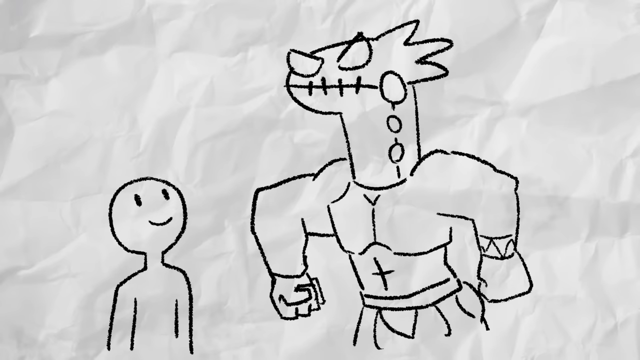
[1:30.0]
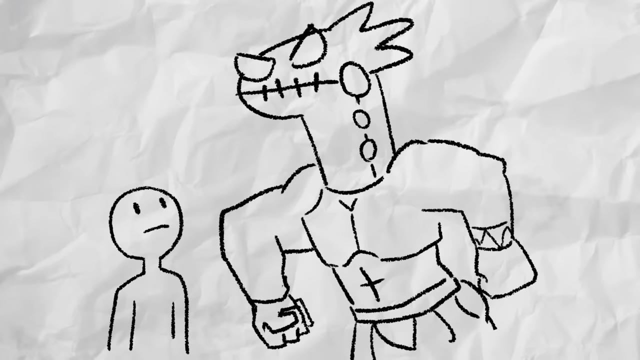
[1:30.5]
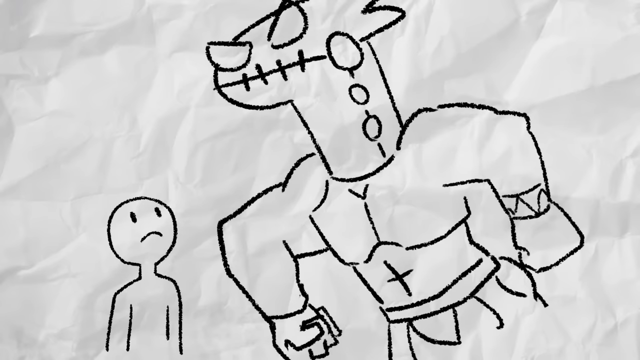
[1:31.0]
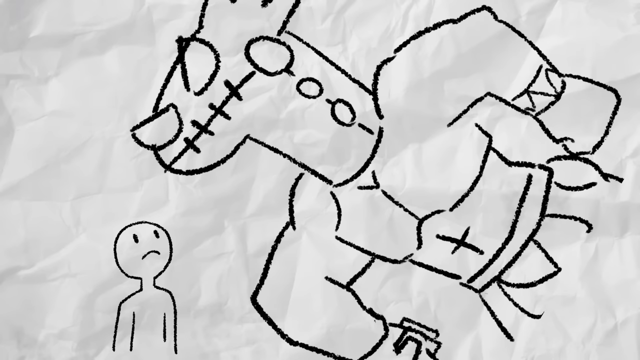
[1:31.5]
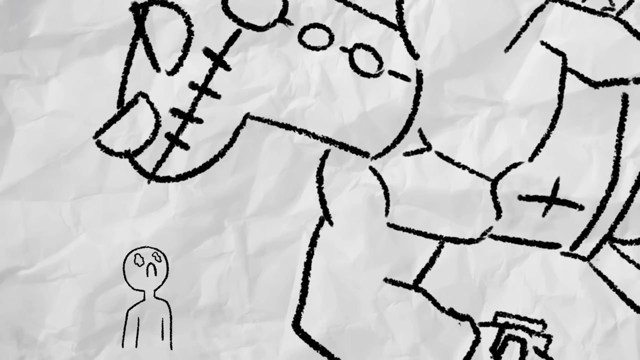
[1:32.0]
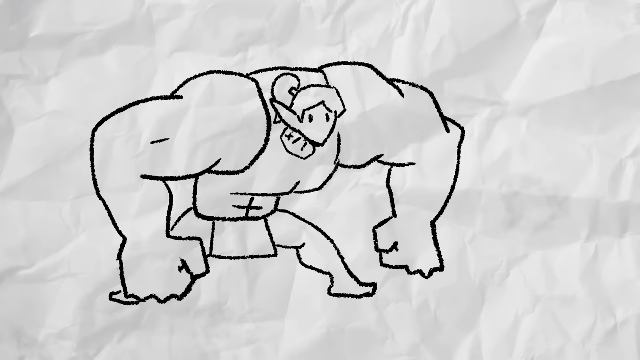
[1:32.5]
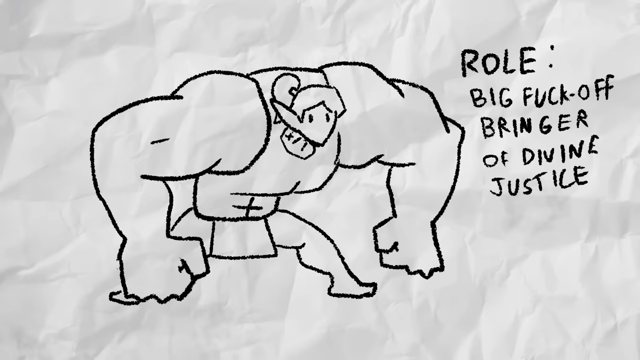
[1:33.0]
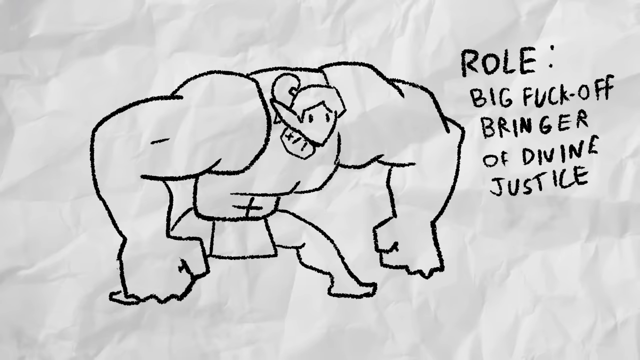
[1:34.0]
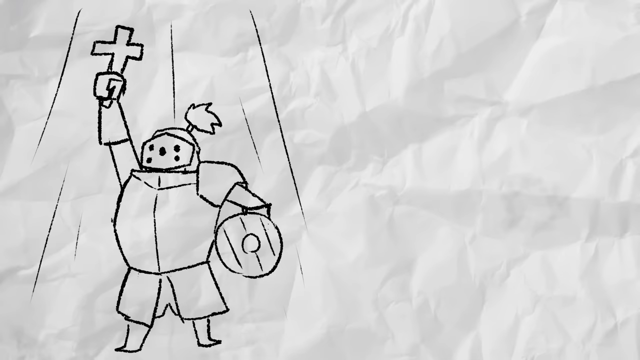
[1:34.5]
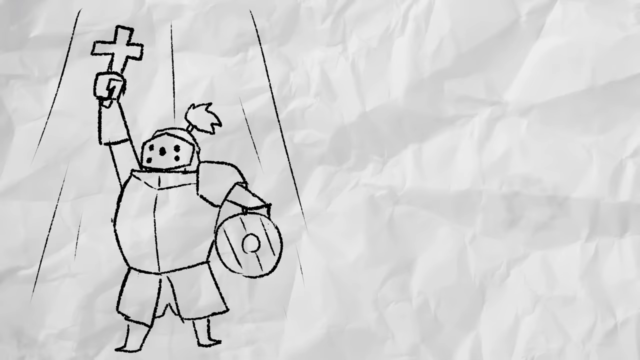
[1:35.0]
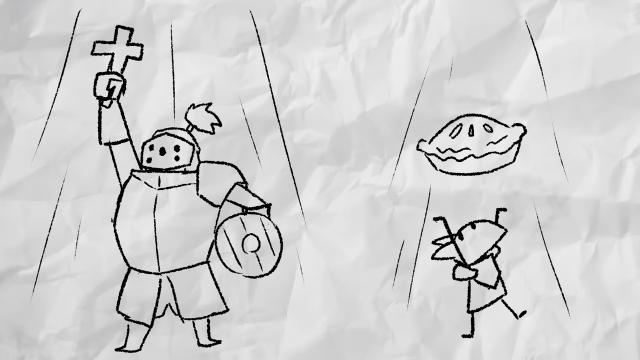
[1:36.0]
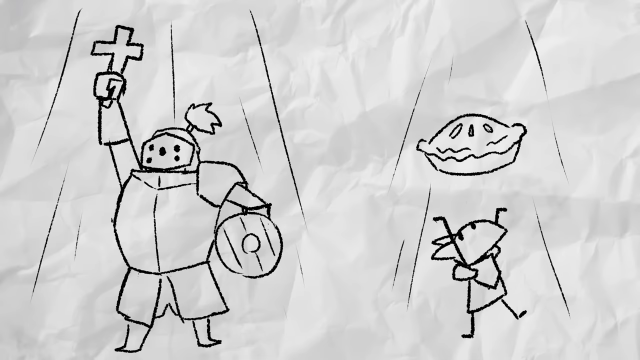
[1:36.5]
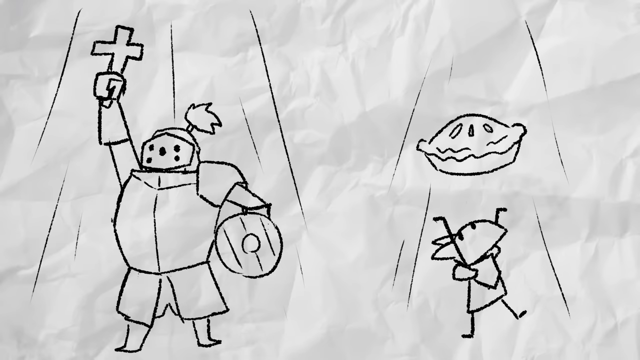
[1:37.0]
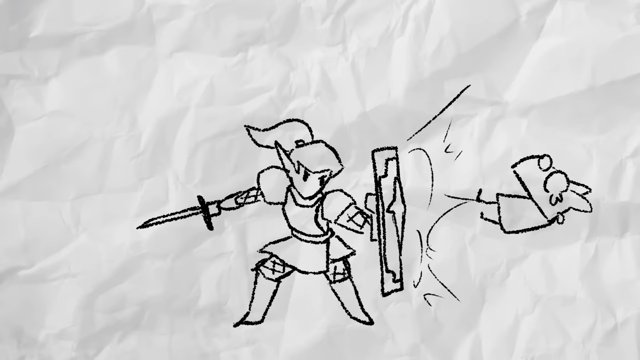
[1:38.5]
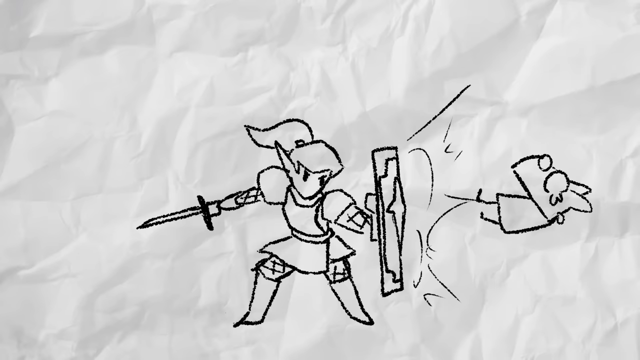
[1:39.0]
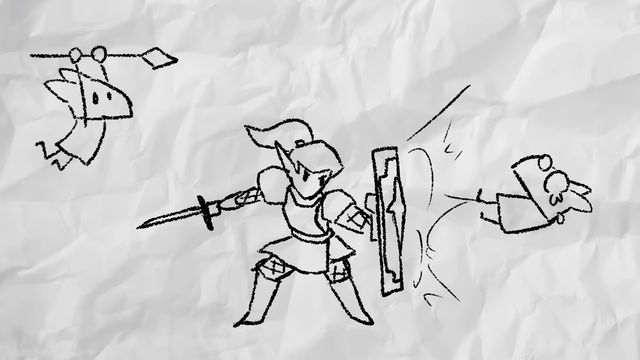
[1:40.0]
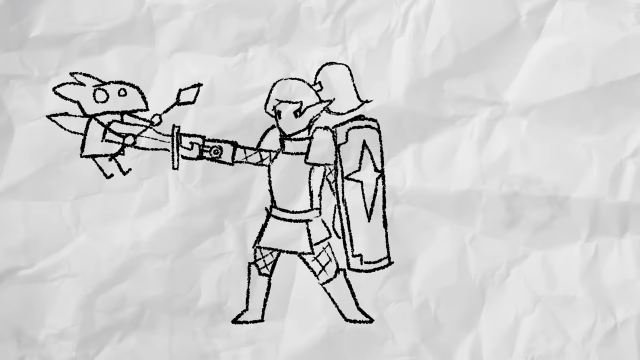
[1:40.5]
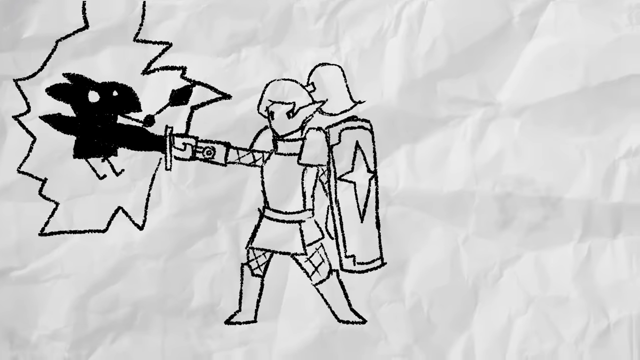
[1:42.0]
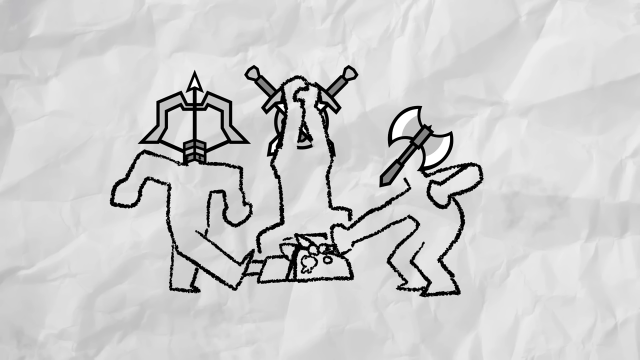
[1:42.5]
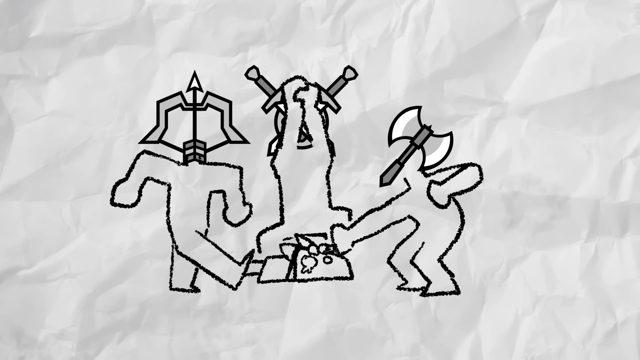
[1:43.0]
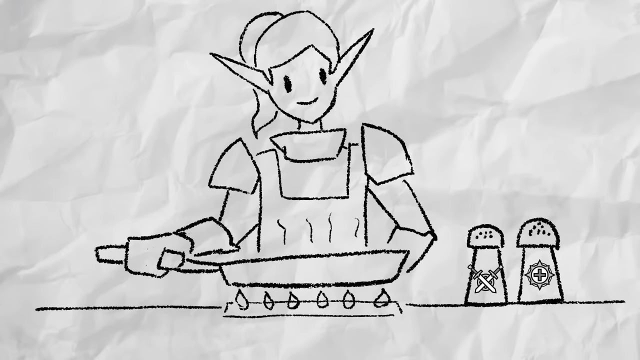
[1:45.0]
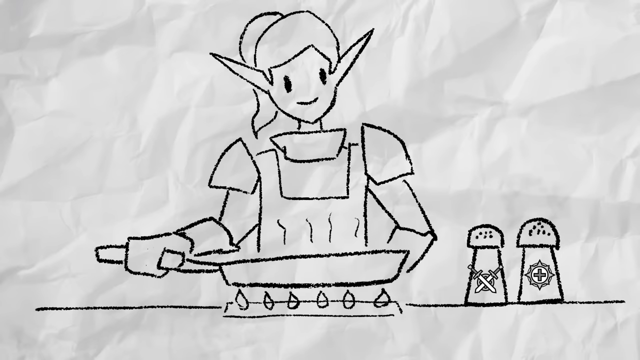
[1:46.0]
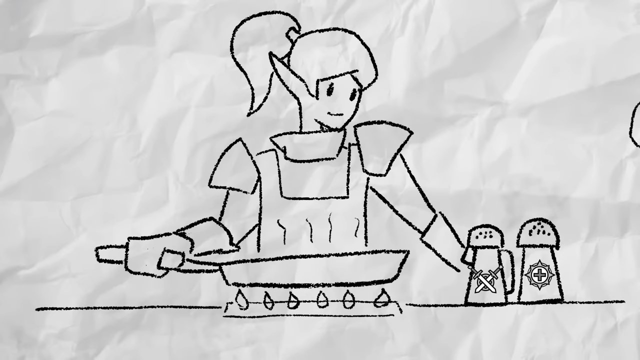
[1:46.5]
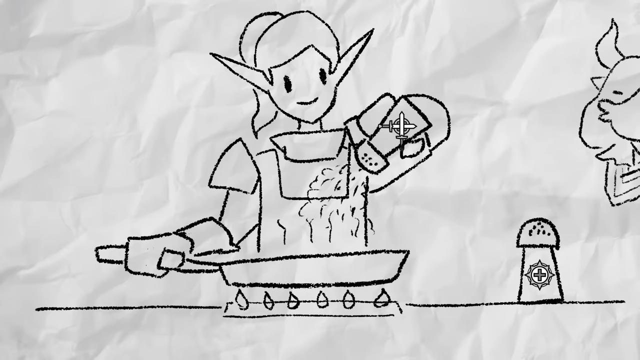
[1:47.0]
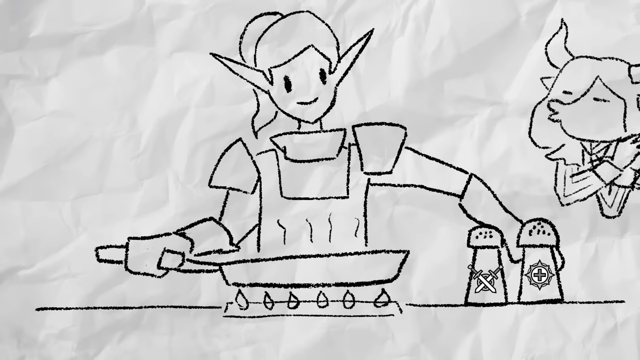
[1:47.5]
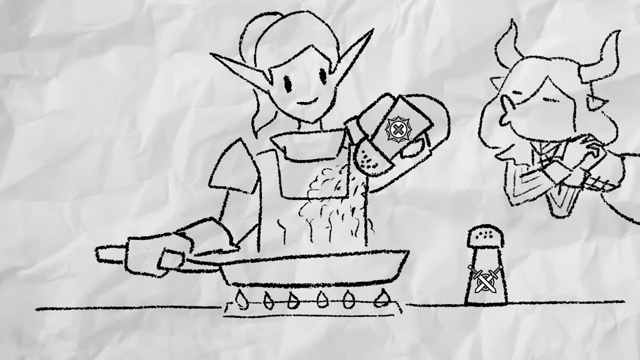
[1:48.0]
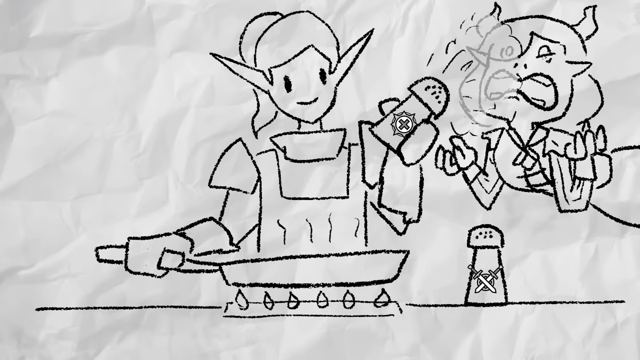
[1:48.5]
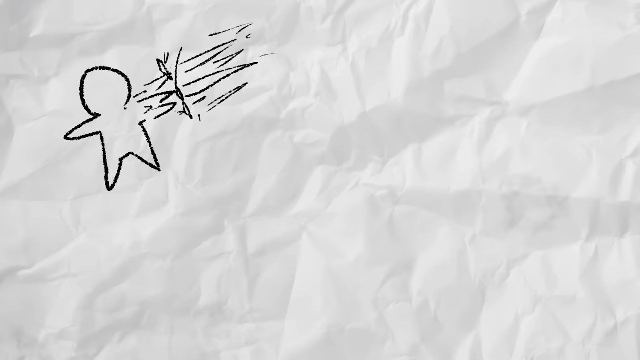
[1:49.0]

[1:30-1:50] On a white crumpled paper background, a person smiles while a monster who looks really angry sort of grips his fist and sort of towers over the character, growing larger as he towers more over him. Another character with very large muscular arms sort of puts him on the ground, and black text says "roll big fuck off bringer of divine justice." A character wearing a bunch of armor holds up a cross and puts it up into the air. A smaller character with a pie sort of throws it up in the air. A character wearing armor with a sword and a shield sort of pushes away one of the smaller characters; one of the smaller characters in the back tries to attack, but the woman with the shield pushes him away and stabs him with her sword. The screen begins to turn black, then transitions to three characters all holding shields and knives, apparently kicking something on the ground. A girl who sort of looks like an elf cooks on the stove, with a salt and pepper shaker on her right; she grabs one of them and puts it onto her meal while a character on the right side sort of creeps in and makes an expression. Then the smaller characters sort of fly in.